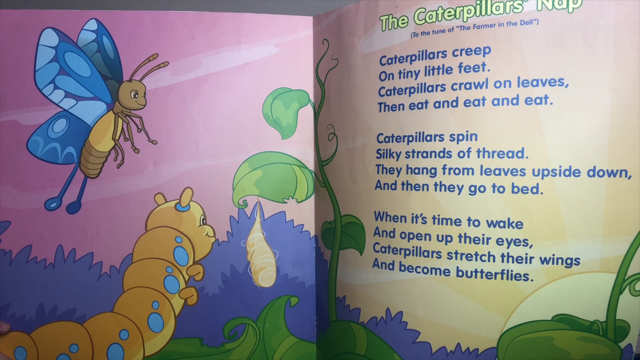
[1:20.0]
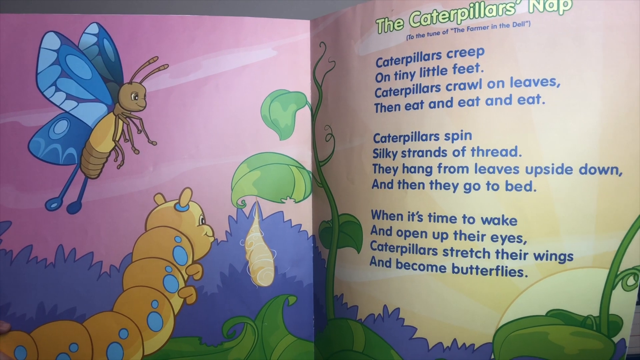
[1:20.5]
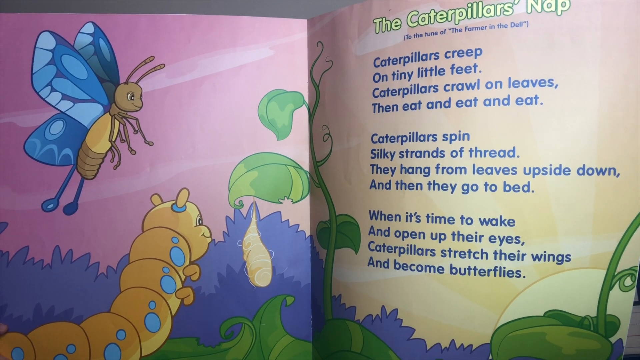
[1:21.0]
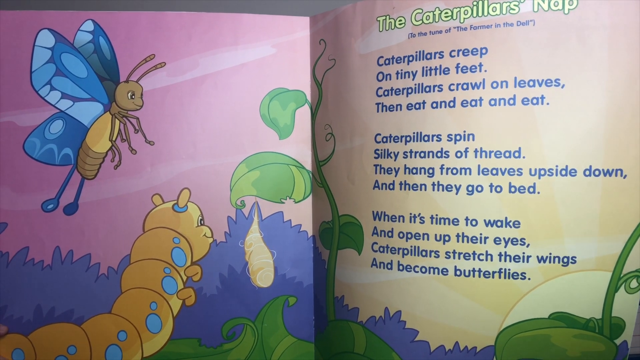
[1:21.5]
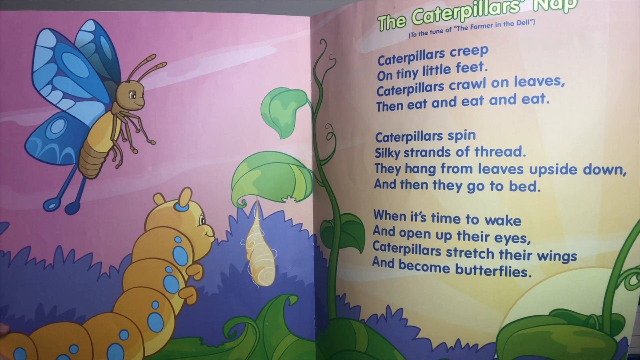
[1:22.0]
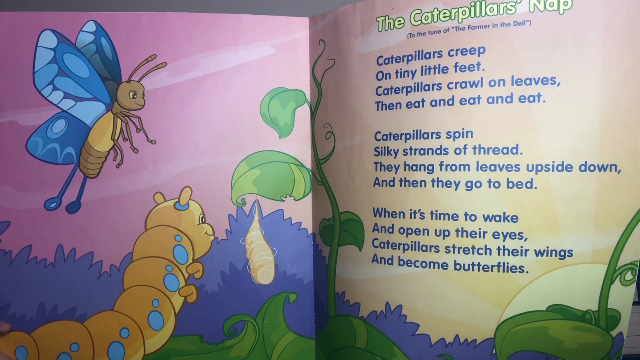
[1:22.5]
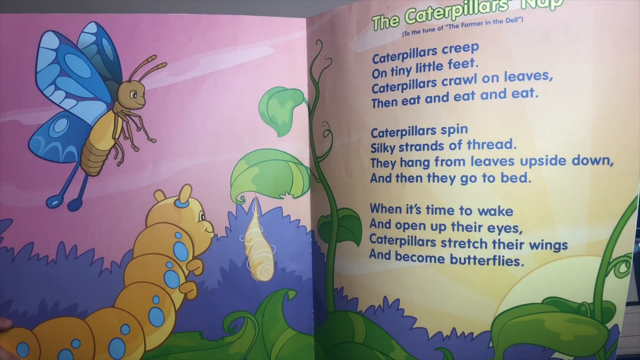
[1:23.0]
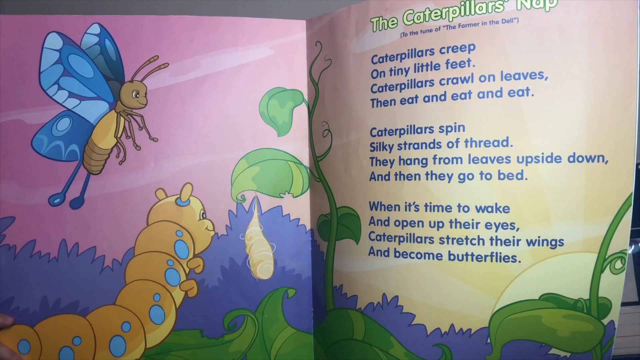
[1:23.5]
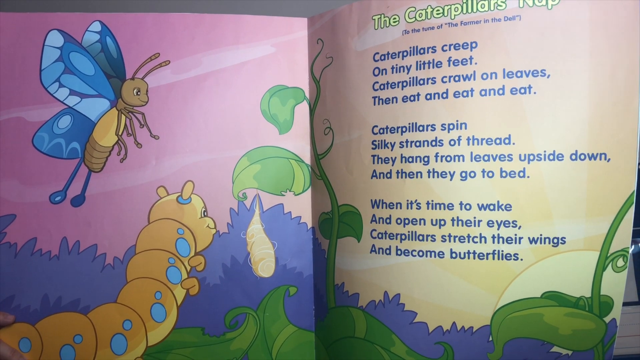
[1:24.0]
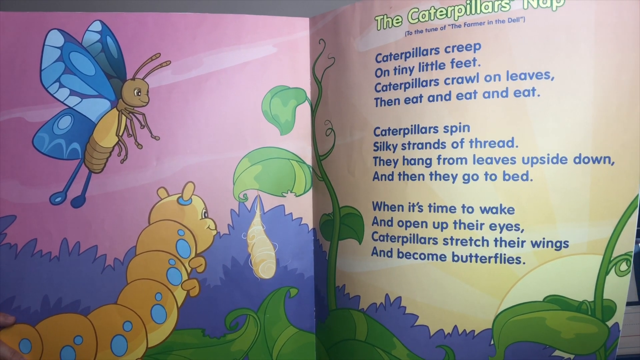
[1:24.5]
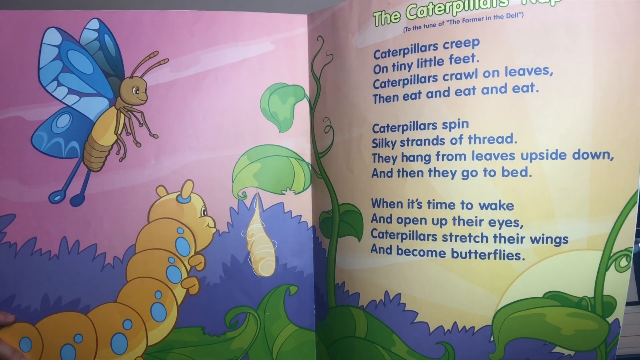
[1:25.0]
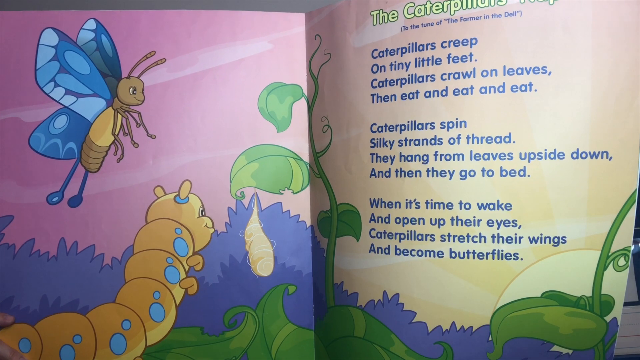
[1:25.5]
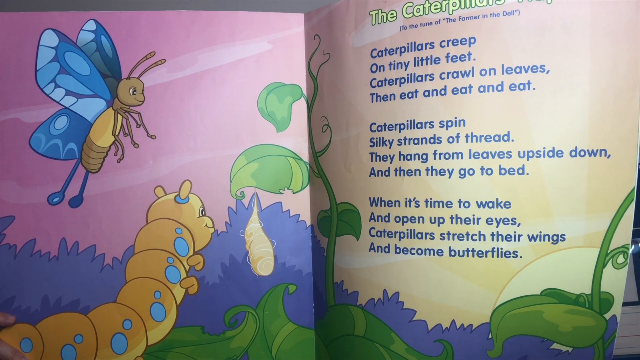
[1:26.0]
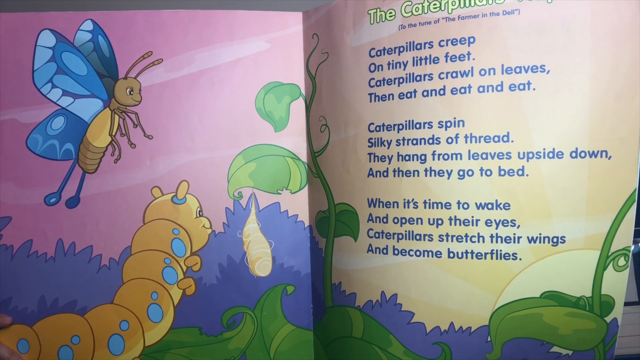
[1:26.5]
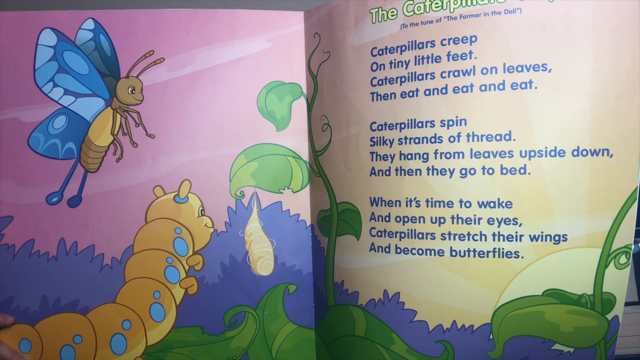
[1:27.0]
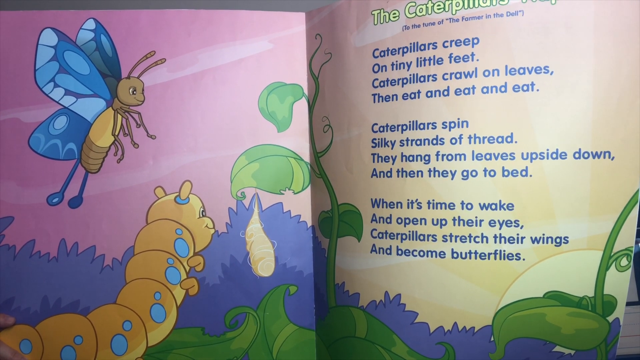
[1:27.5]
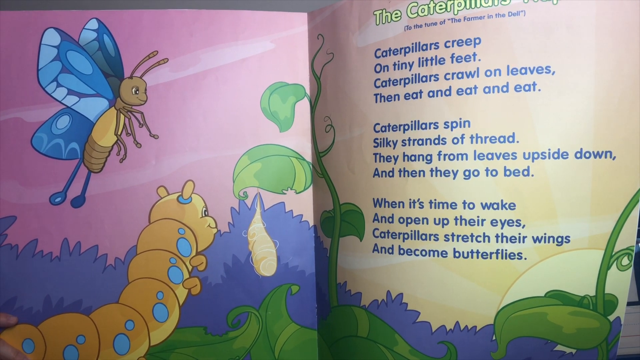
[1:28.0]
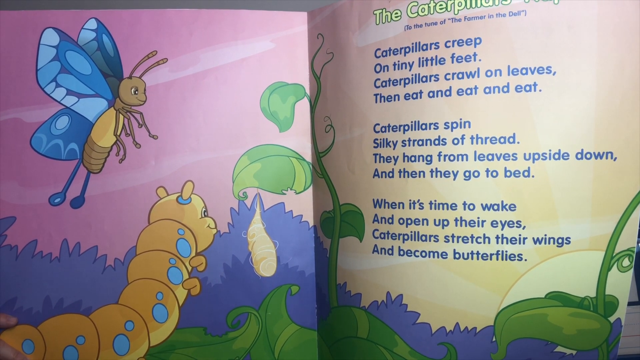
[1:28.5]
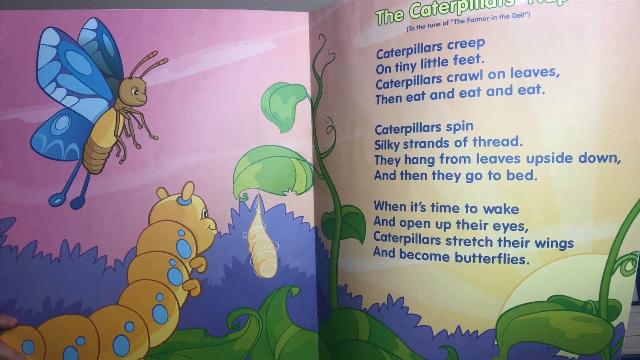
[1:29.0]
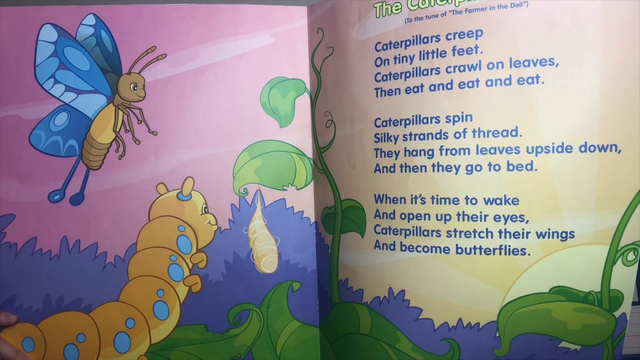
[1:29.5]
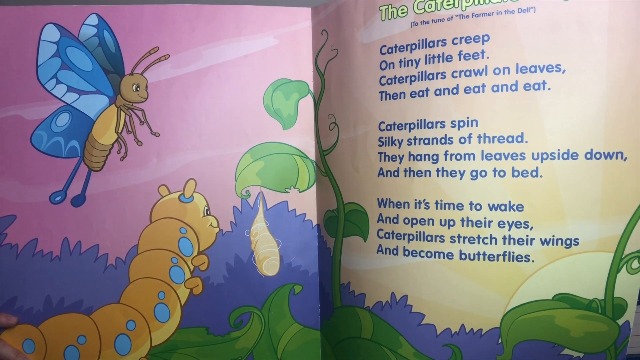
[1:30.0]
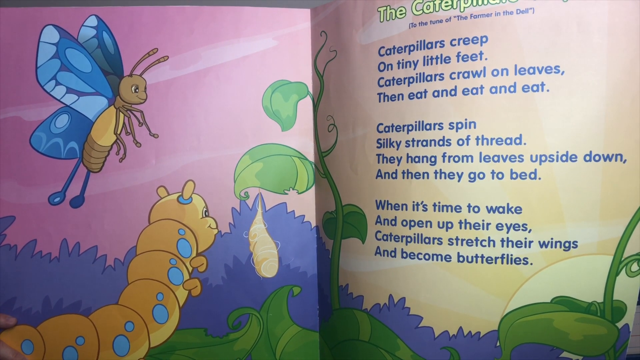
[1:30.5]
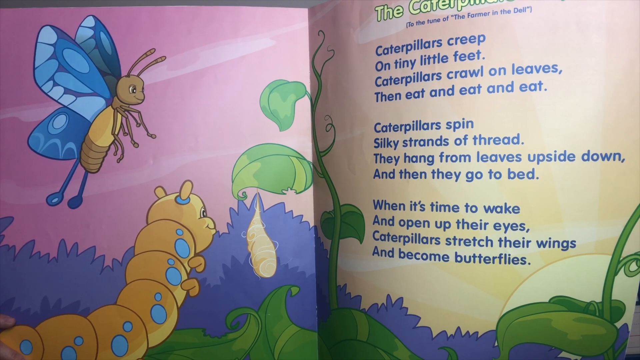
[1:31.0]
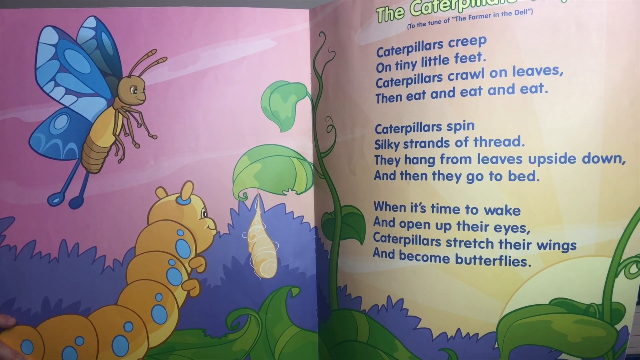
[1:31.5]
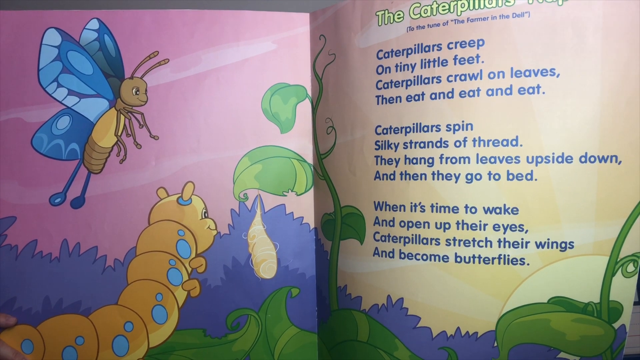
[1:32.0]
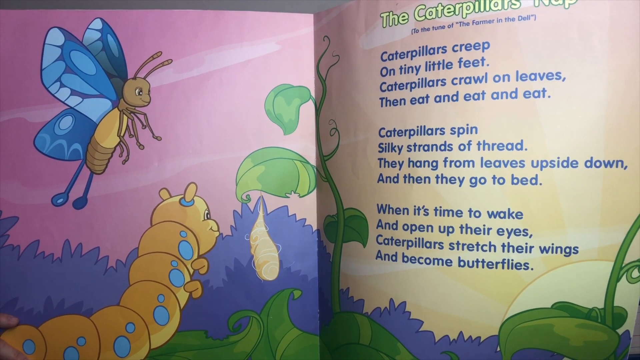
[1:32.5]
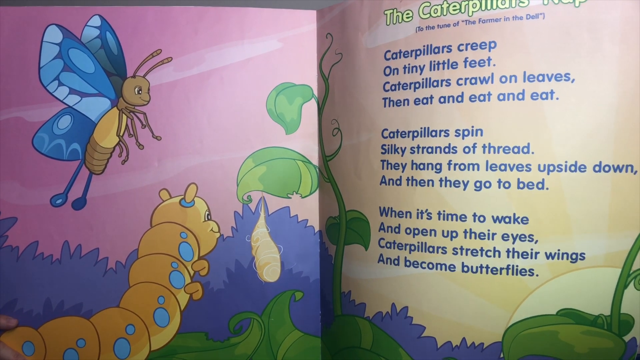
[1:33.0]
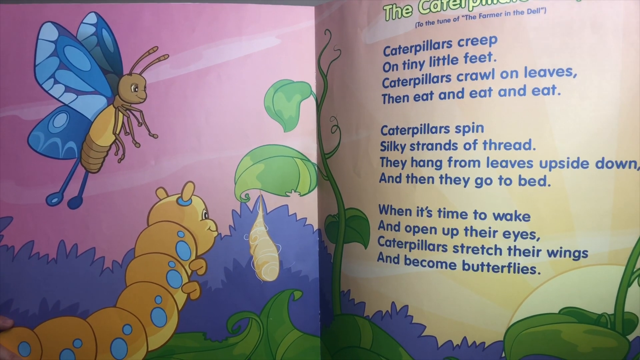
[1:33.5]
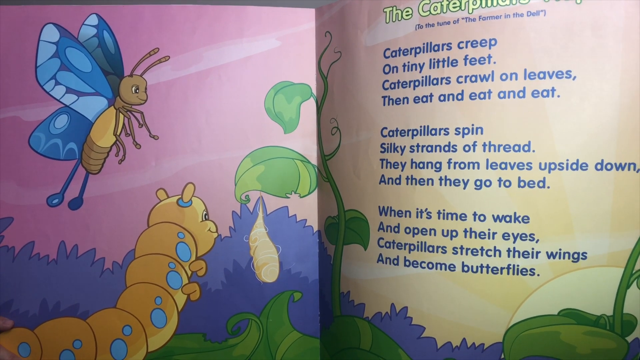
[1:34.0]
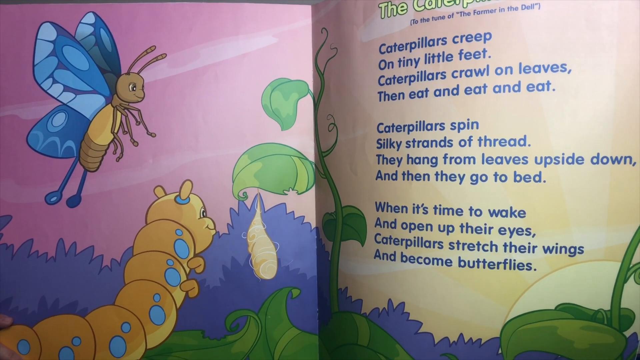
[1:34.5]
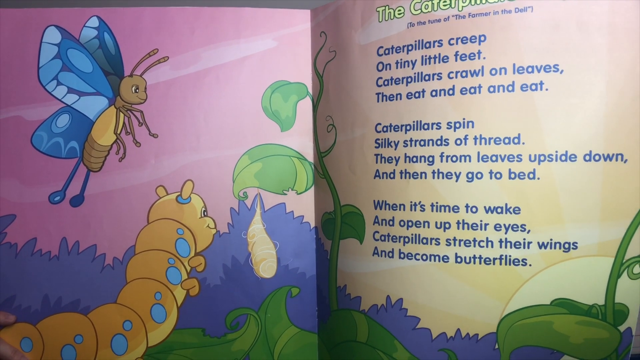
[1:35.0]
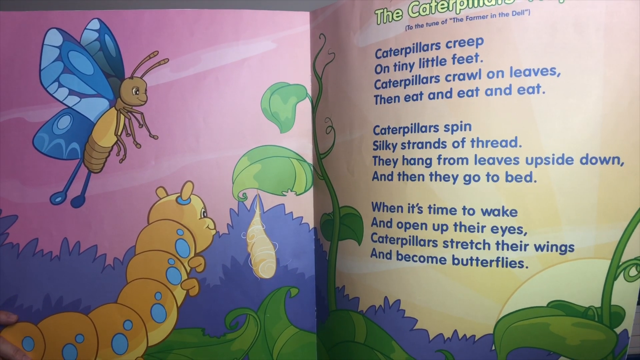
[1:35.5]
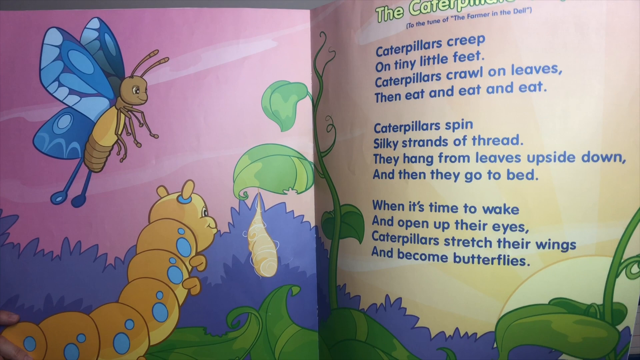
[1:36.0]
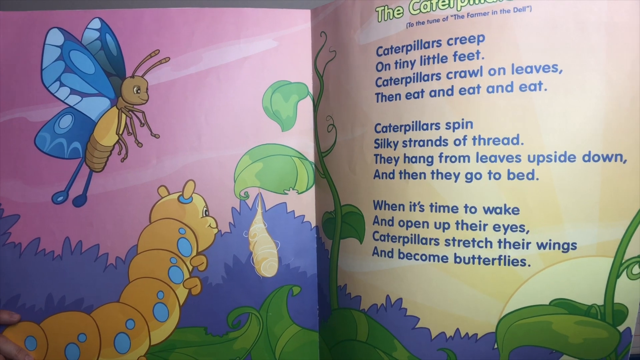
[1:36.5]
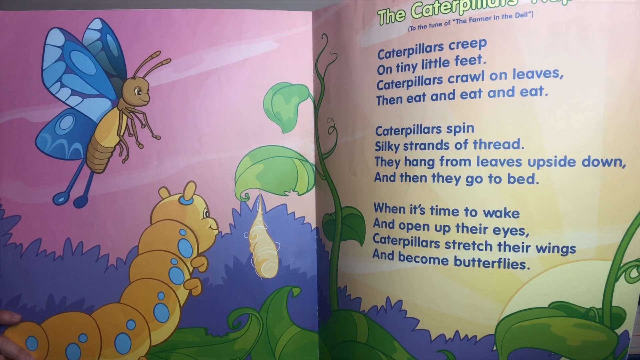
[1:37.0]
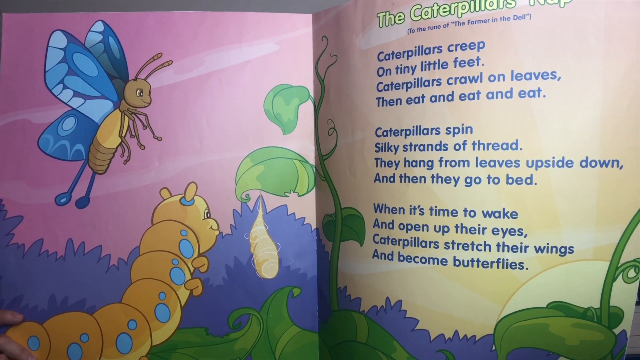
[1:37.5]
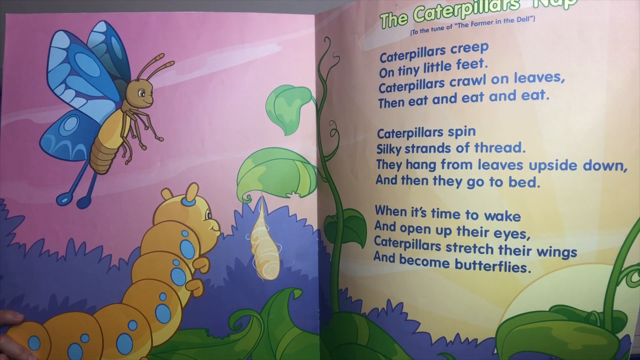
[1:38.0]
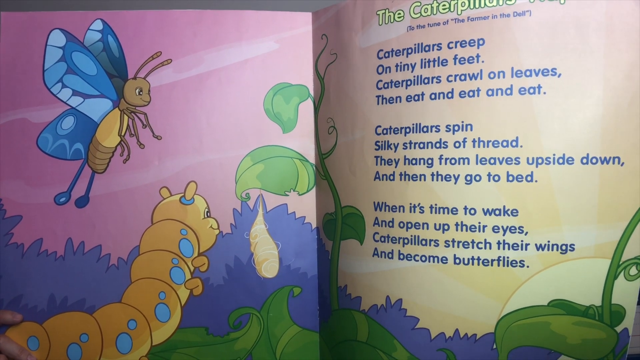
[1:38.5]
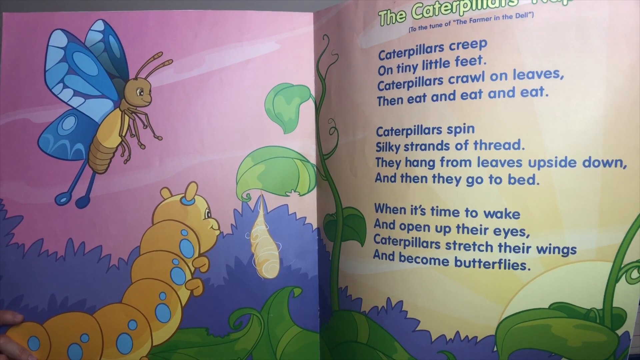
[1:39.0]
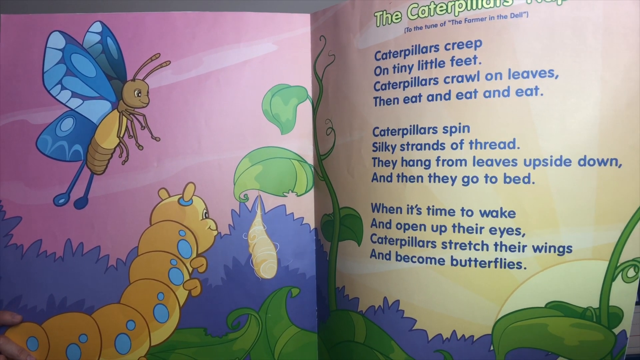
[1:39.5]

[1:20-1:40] The same page stays in view. There are plants at the bottom, and the butterfly's wings are patterned. The woman is probably talking, apparently reading or singing very slowly.